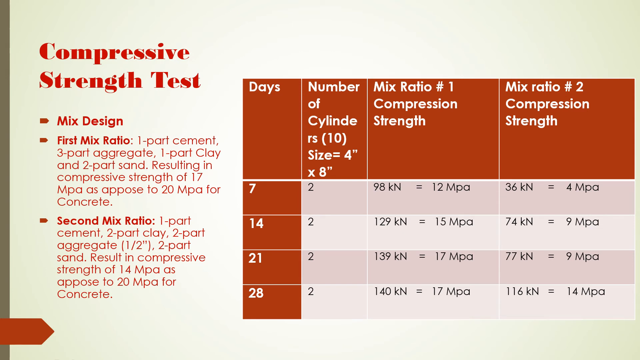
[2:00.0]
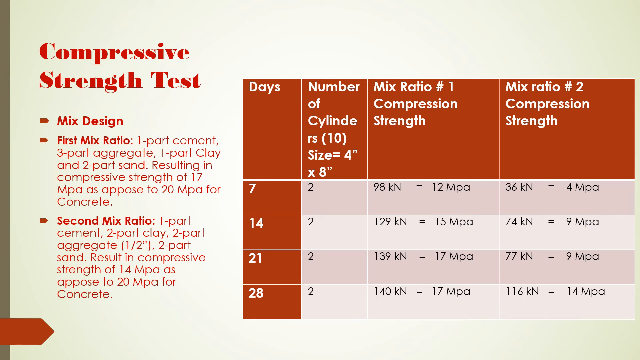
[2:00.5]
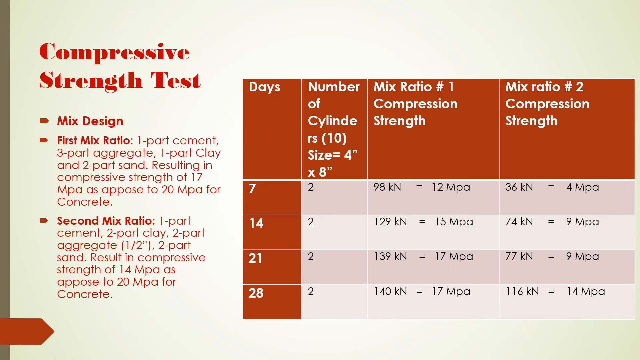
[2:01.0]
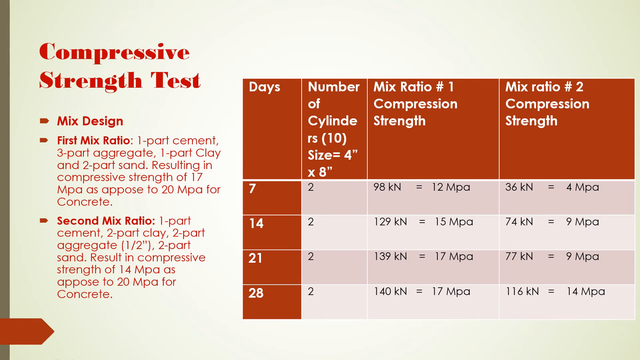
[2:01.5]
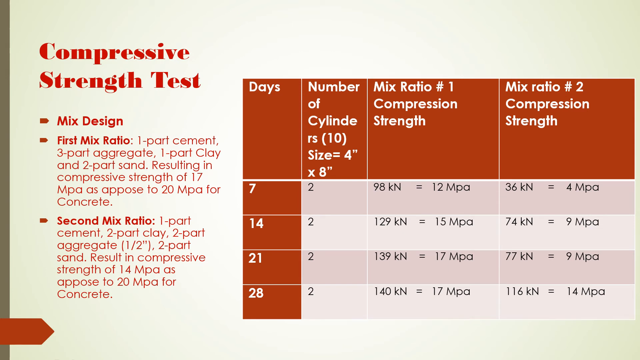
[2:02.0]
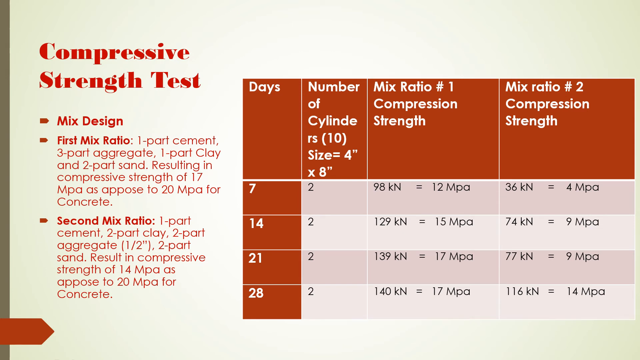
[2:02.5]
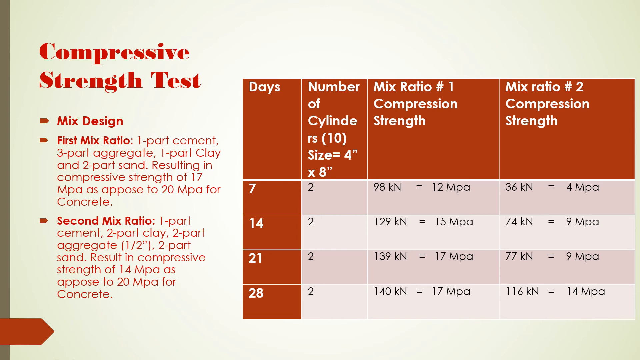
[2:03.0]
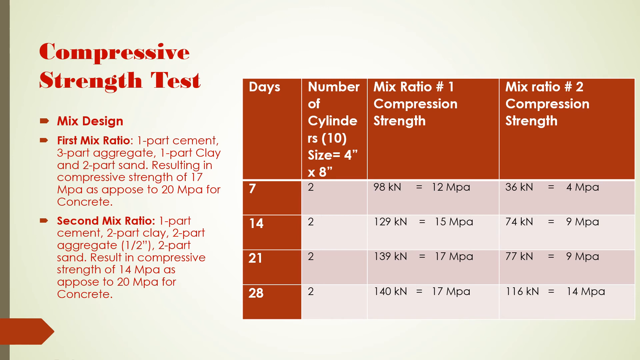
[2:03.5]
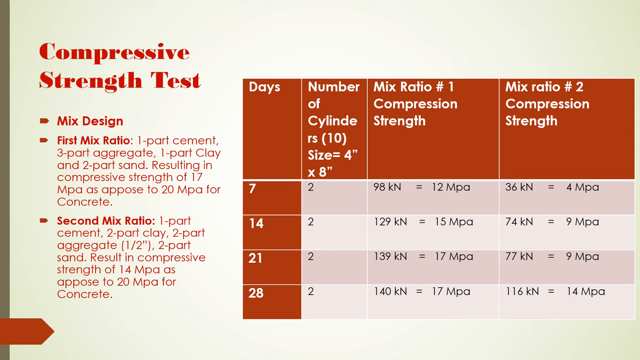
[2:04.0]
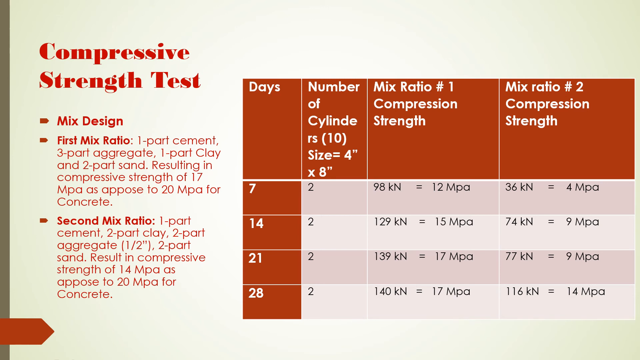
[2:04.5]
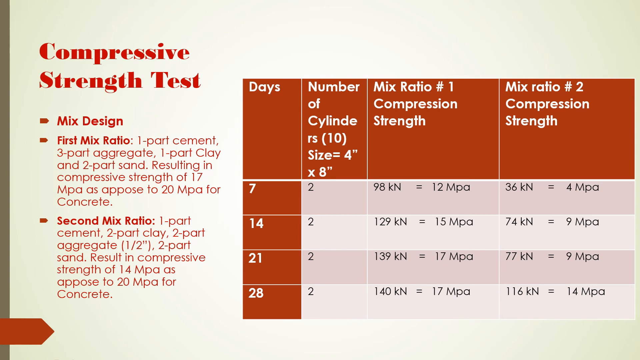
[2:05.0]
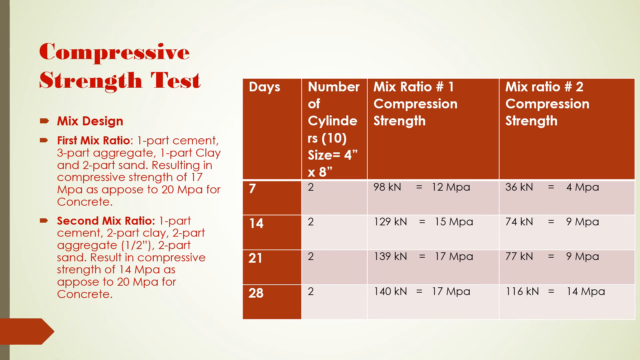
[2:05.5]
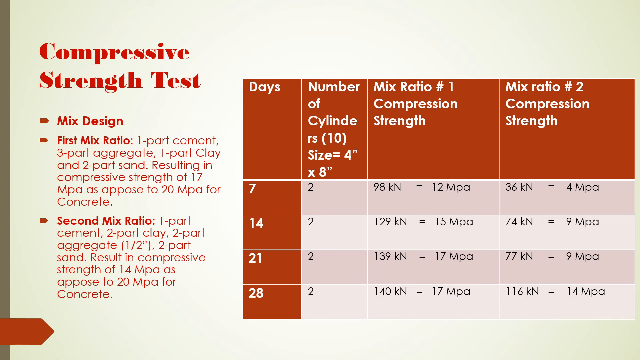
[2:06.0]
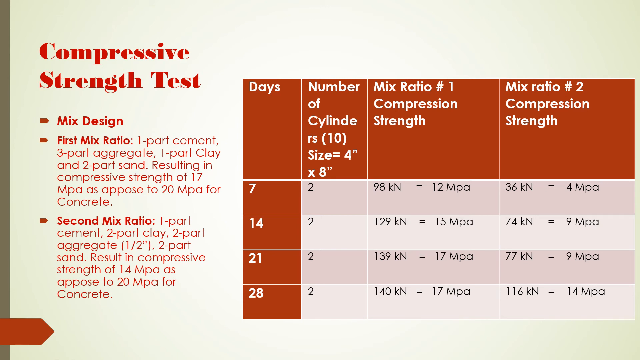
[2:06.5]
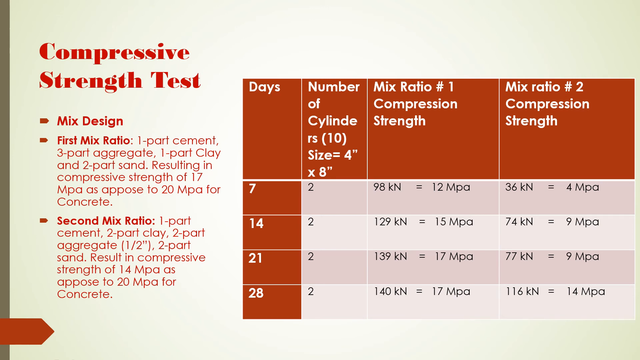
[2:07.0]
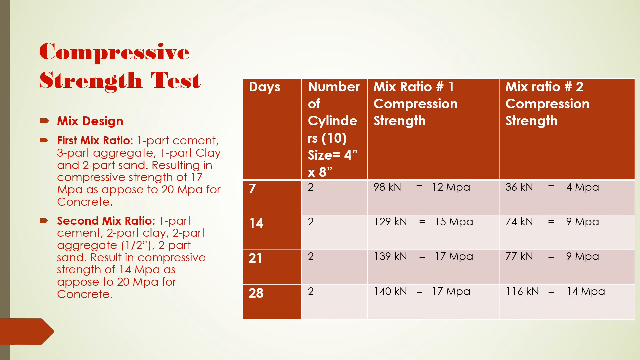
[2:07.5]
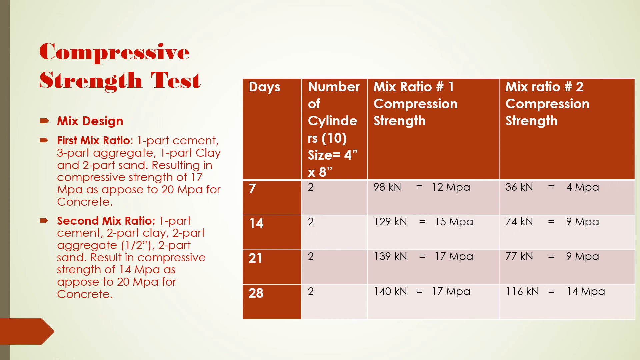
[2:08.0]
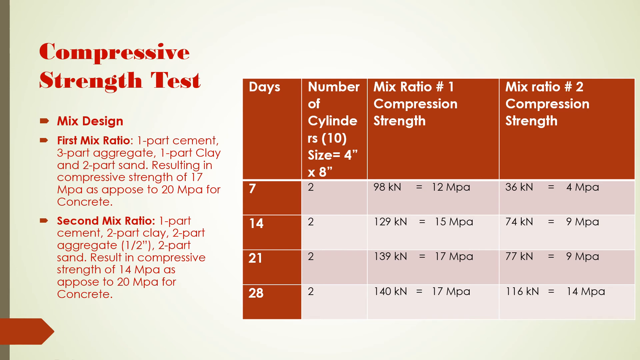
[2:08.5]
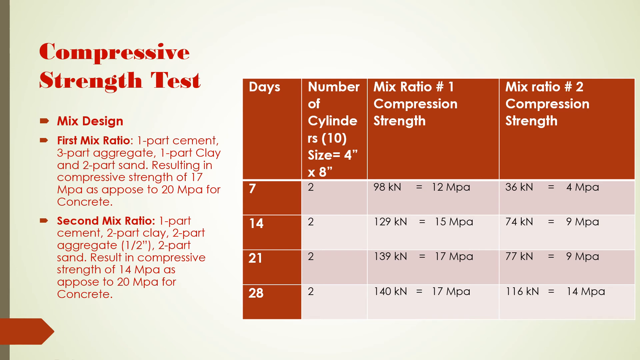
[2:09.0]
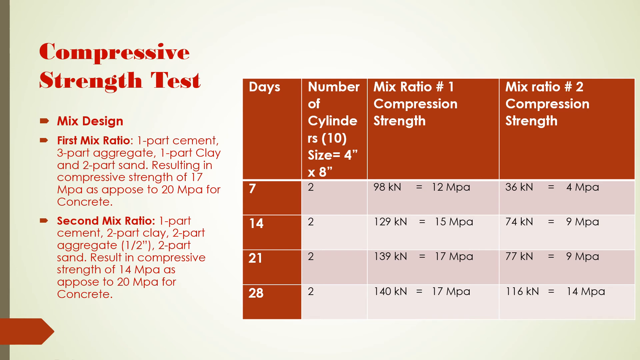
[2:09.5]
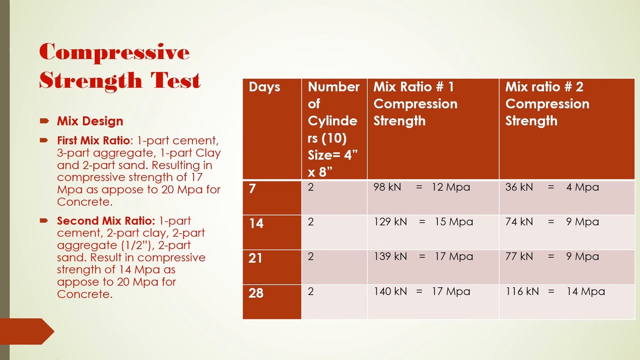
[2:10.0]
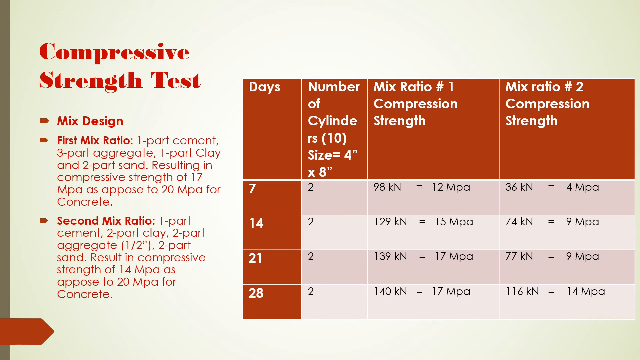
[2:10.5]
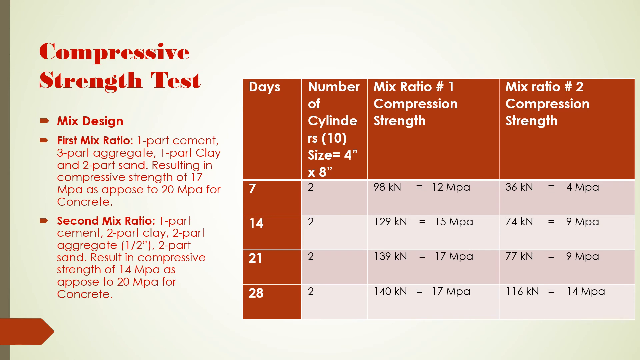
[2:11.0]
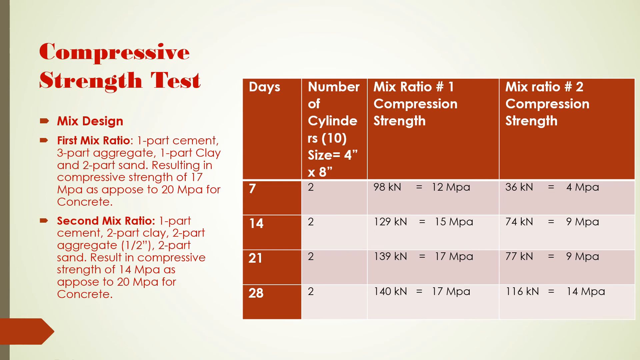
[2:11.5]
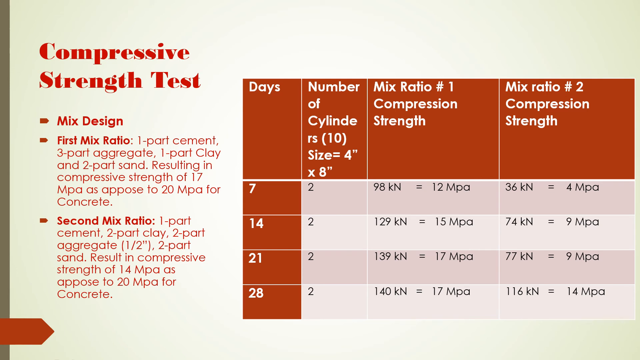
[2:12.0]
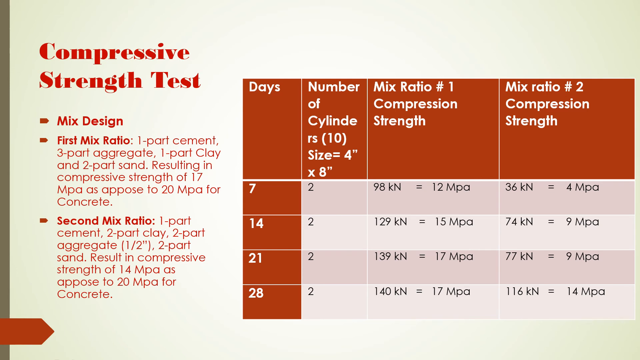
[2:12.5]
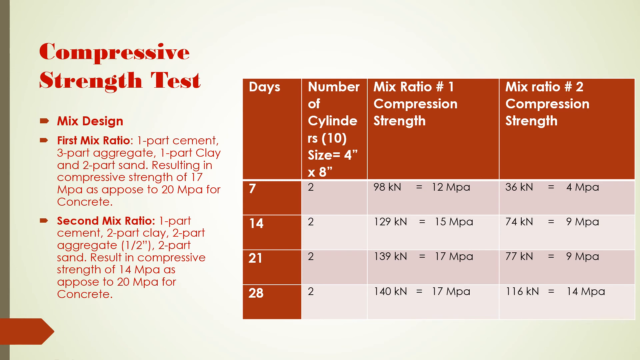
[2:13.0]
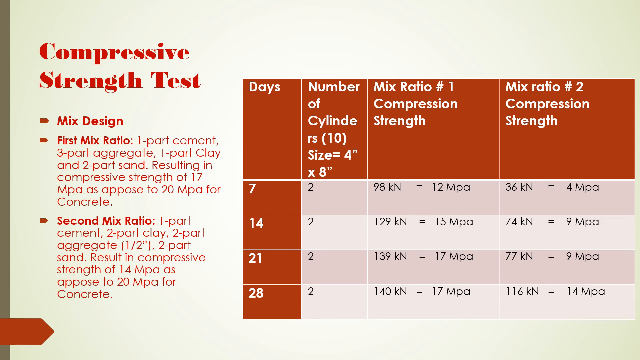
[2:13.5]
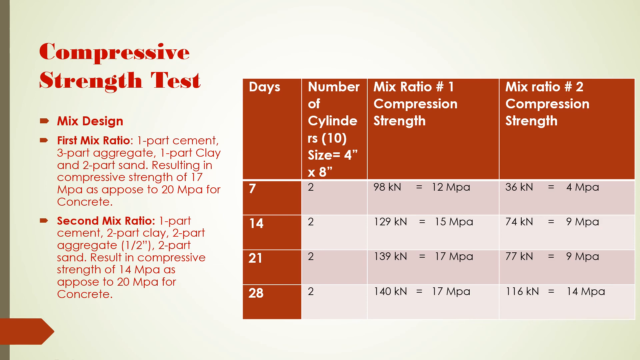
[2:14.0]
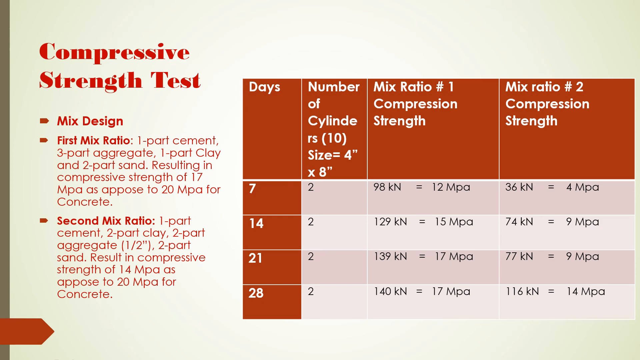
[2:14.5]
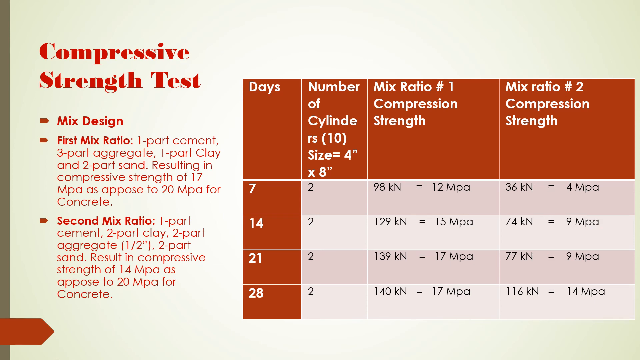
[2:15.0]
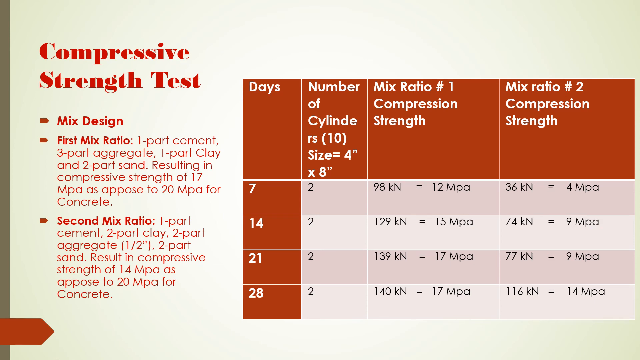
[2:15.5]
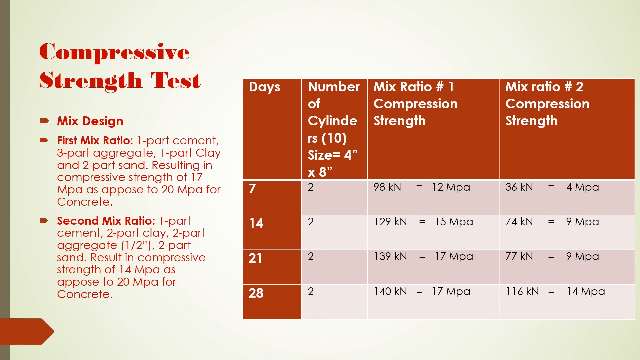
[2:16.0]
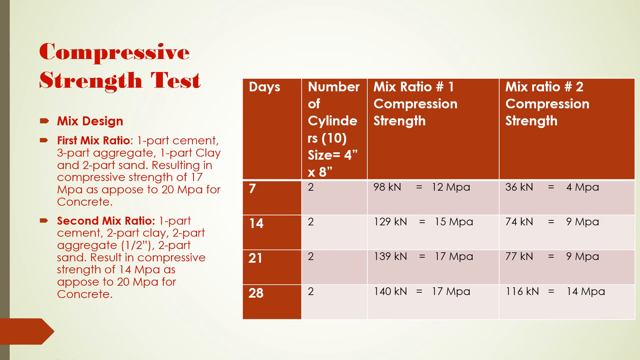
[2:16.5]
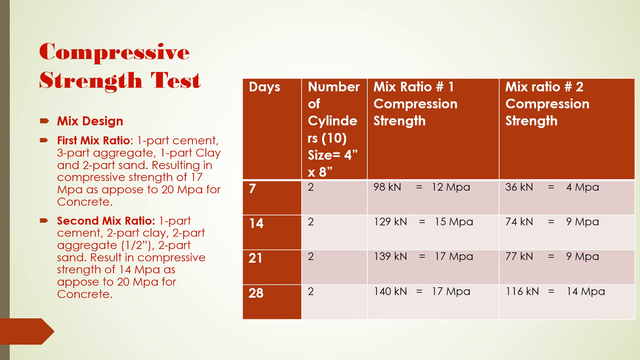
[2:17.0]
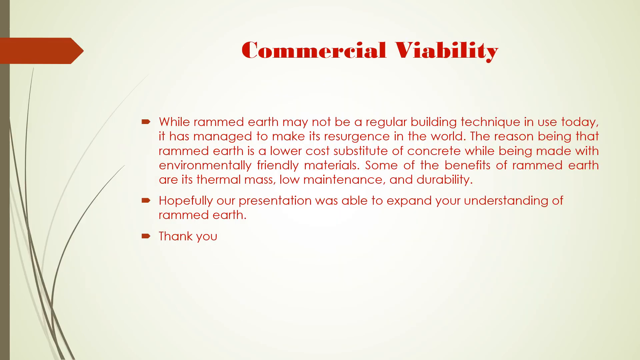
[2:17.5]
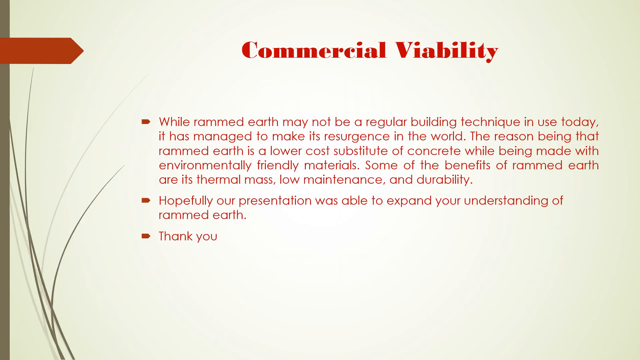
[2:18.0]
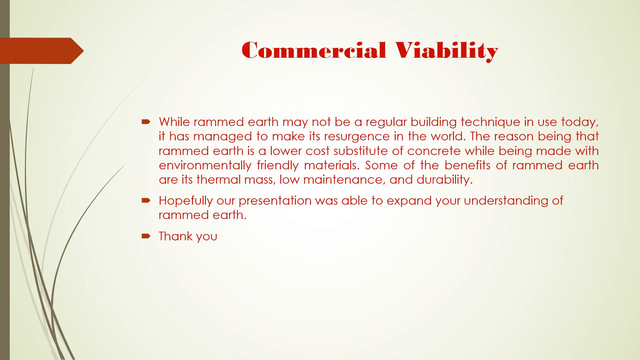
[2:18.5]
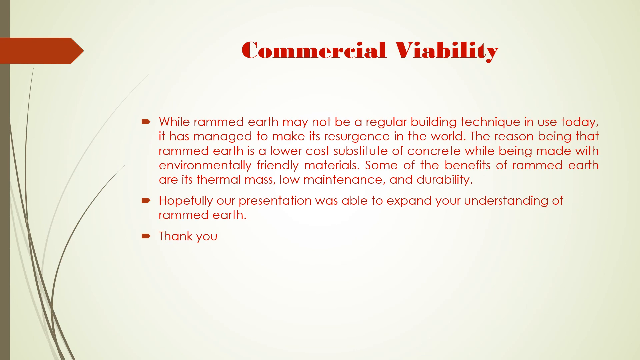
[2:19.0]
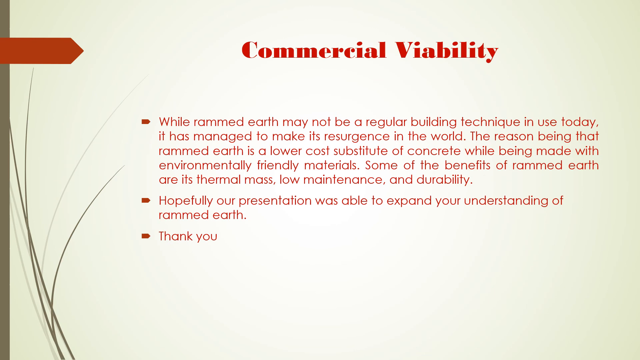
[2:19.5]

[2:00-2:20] A slide shows "compressive strength test" in red bold text at the top of the screen. On the left-hand side are three bullet points: "mixed design" in bold red text; "first mix ratio. One part cement, three part aggregate, one part clay, and two part sand resulting in compressive strength of 17 MPa as opposed to 20 MPa for concrete"; and a third beginning "second mix ratio. One part cement, two part clay, two part aggregate" and ending with a compressive strength of "14 MPa as opposed to 20 MPa for concrete." A small table on the right side of the screen shows what to do to get different results. Next, a slide says "Commercial viability." The first bullet point reads "while rammed earth may not be a regular building technique in use today, it has managed to make its resurgence in the world. The reason being that rammed earth is a lower cost substitute of concrete while being made with environmentally friendly materials. Some of the benefits of rammed earth are its thermal mass, low maintenance, and durability." The second reads "hopefully our presentation was able to expand your understanding of rammed earth," and the third says "thank you."